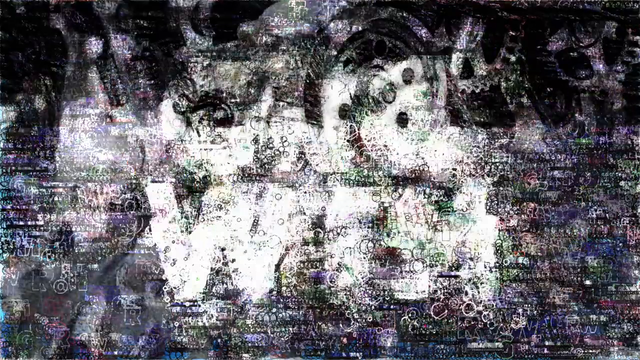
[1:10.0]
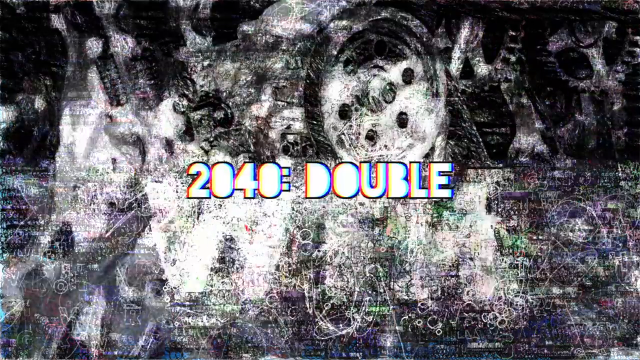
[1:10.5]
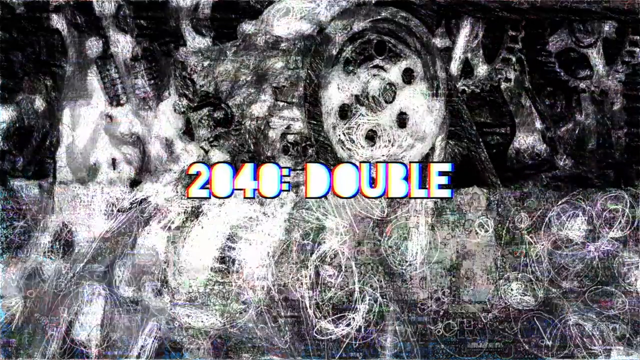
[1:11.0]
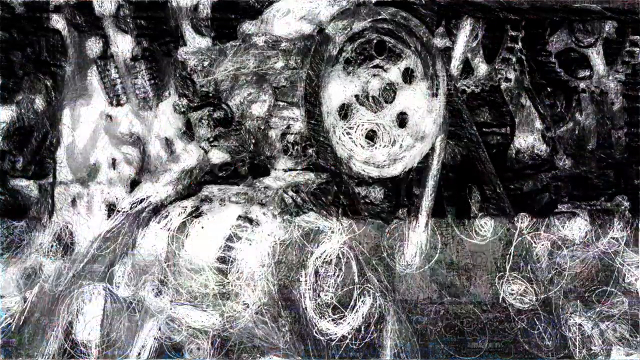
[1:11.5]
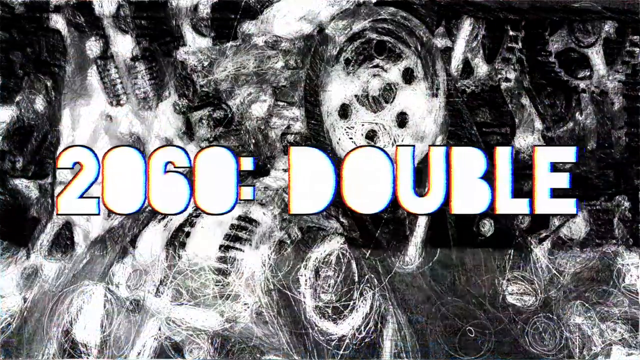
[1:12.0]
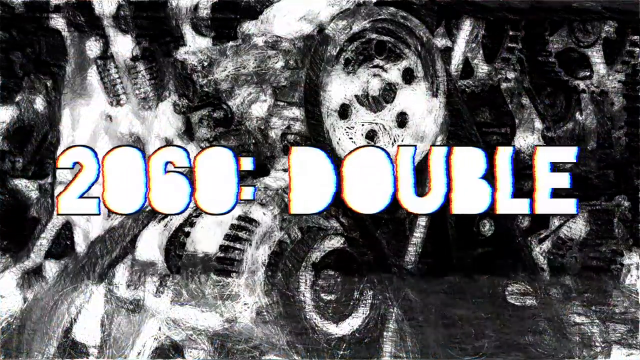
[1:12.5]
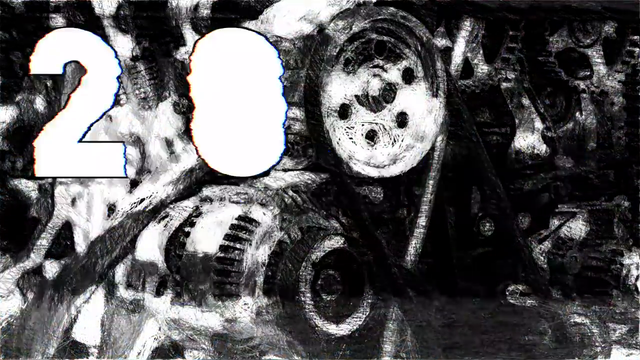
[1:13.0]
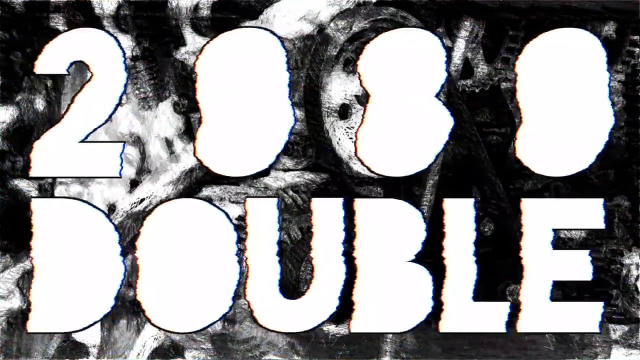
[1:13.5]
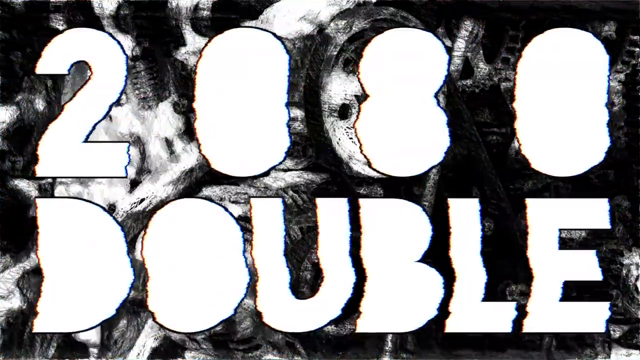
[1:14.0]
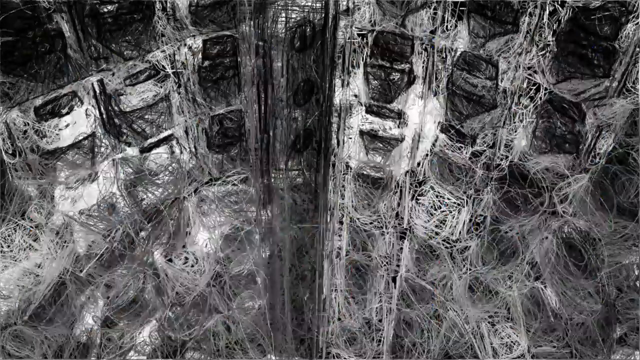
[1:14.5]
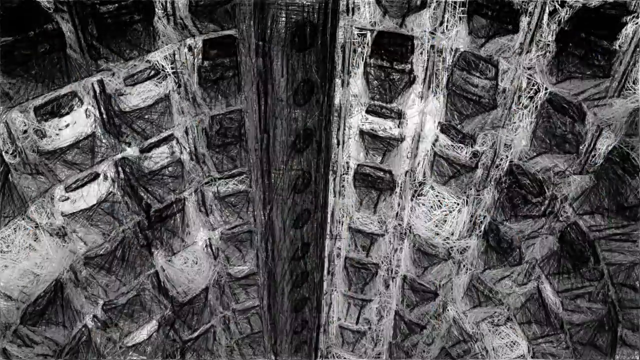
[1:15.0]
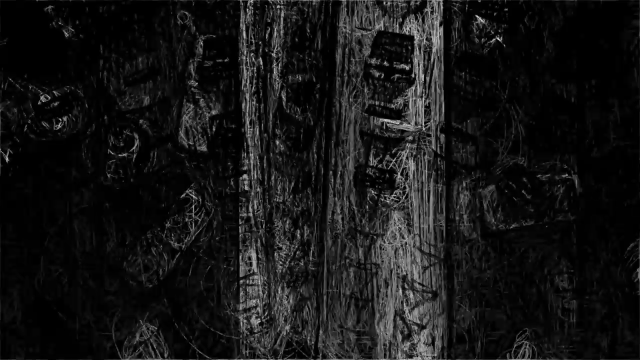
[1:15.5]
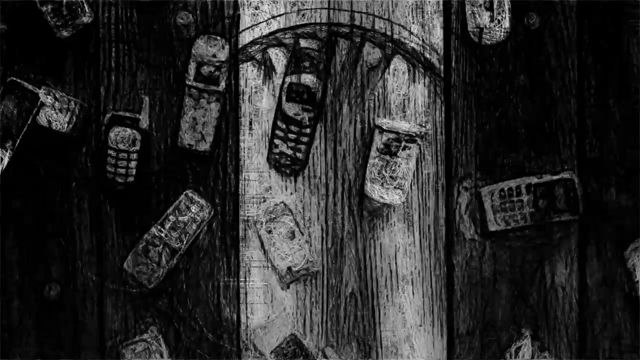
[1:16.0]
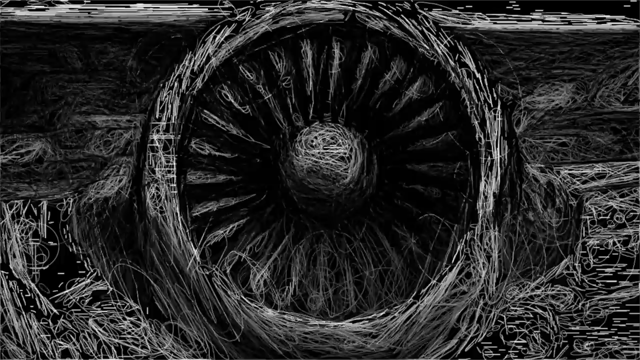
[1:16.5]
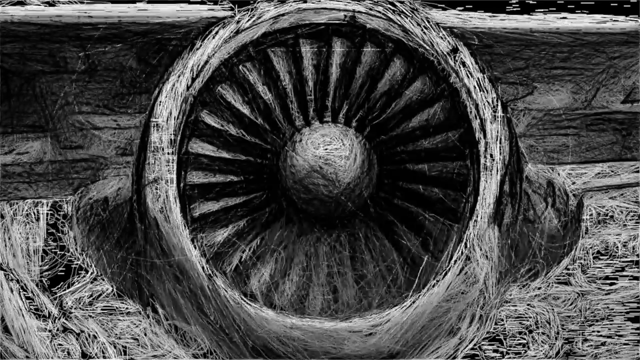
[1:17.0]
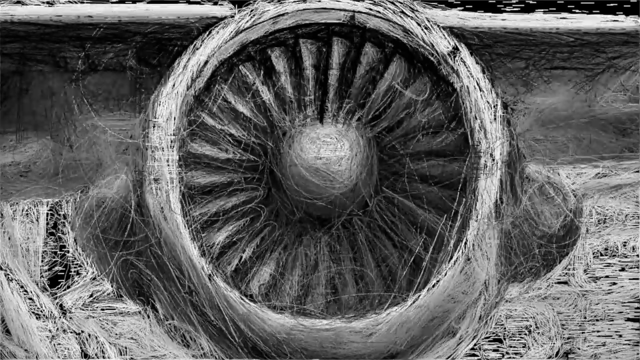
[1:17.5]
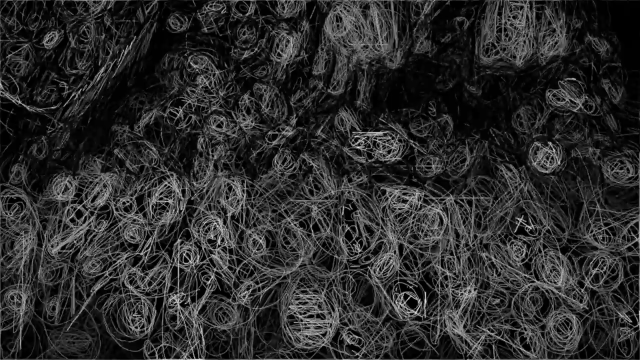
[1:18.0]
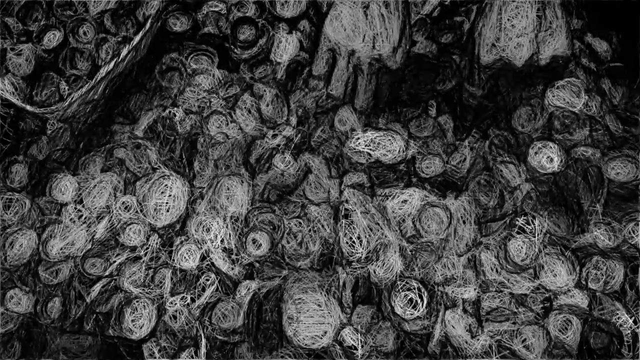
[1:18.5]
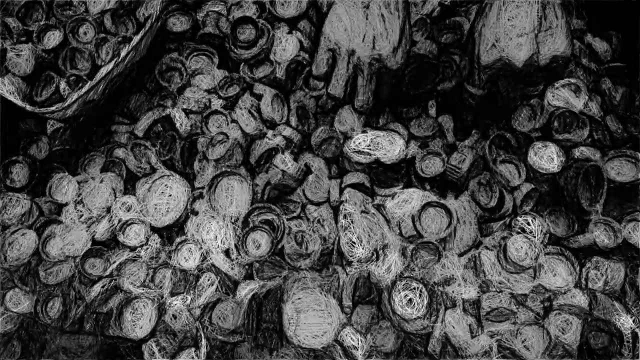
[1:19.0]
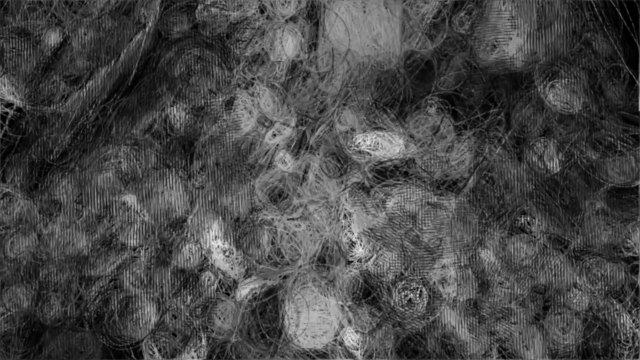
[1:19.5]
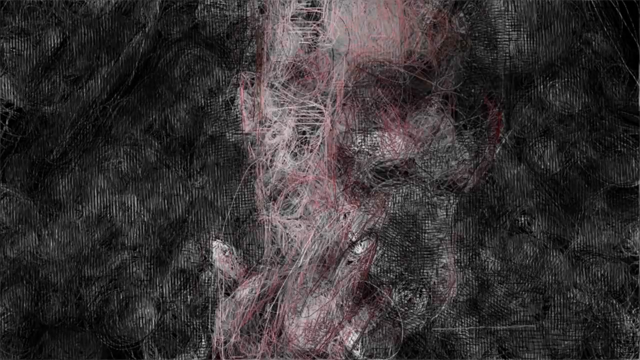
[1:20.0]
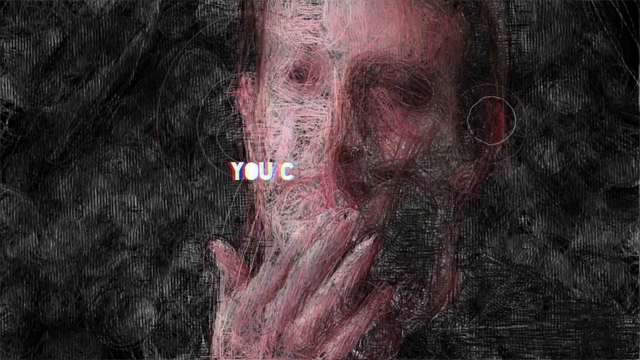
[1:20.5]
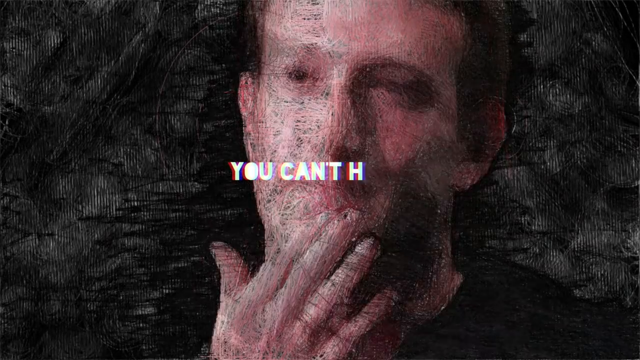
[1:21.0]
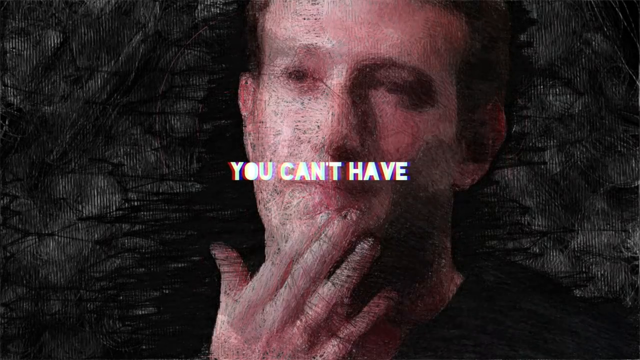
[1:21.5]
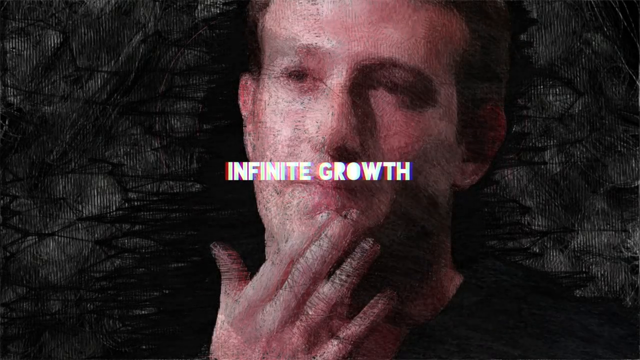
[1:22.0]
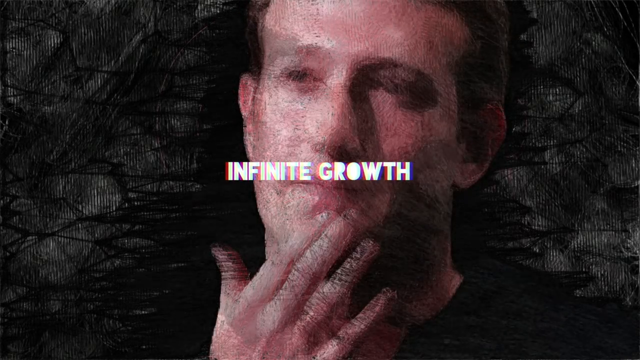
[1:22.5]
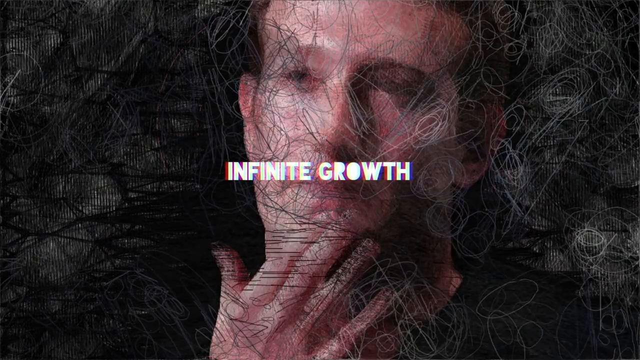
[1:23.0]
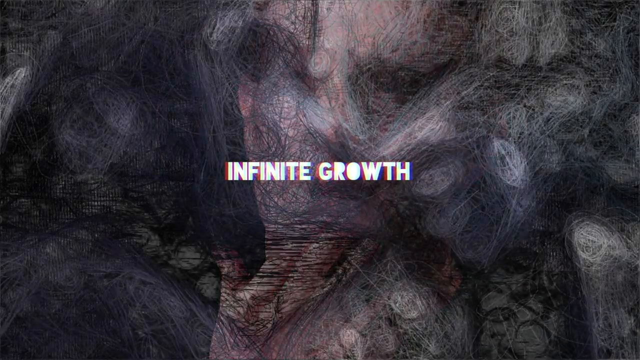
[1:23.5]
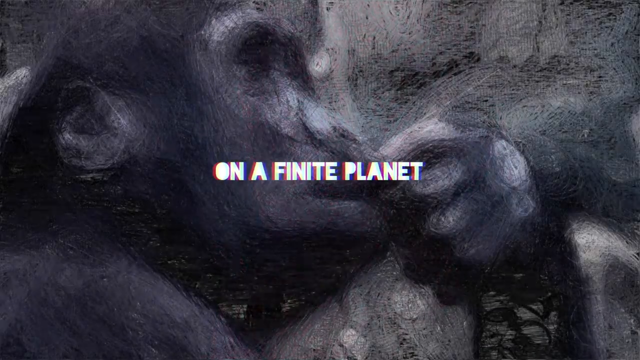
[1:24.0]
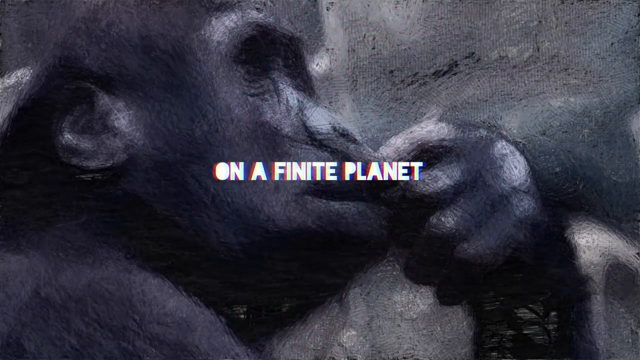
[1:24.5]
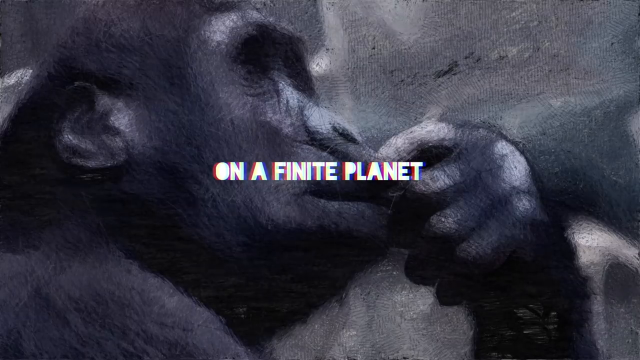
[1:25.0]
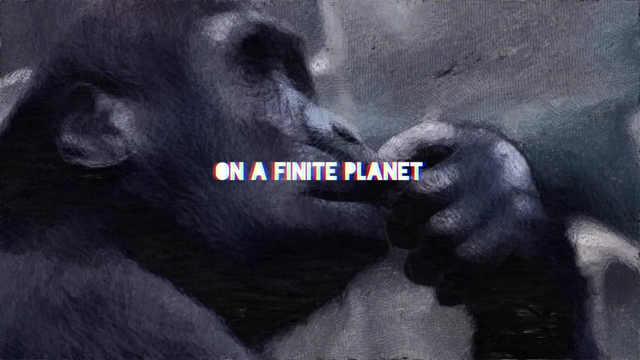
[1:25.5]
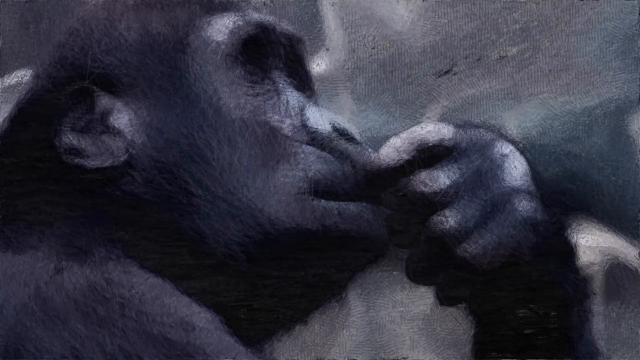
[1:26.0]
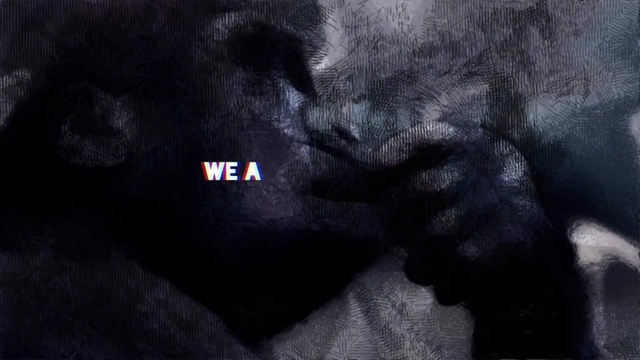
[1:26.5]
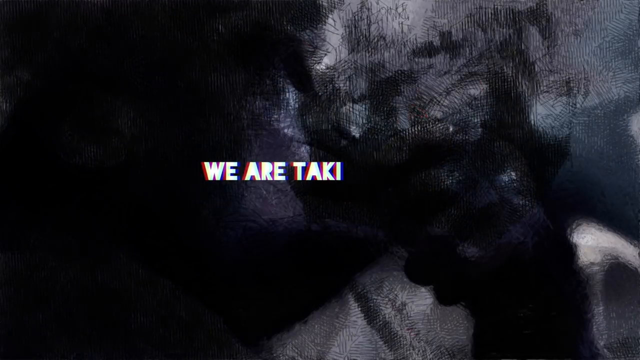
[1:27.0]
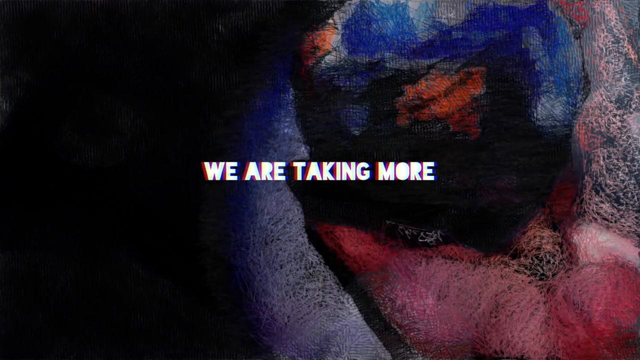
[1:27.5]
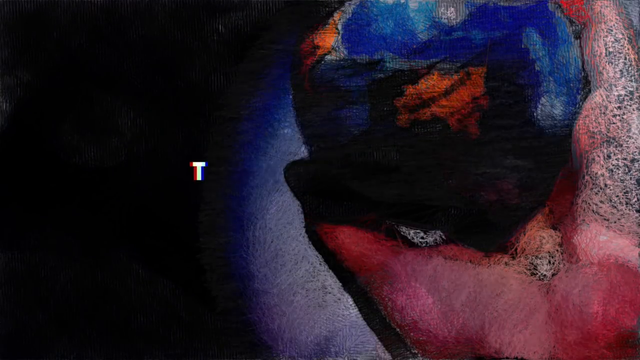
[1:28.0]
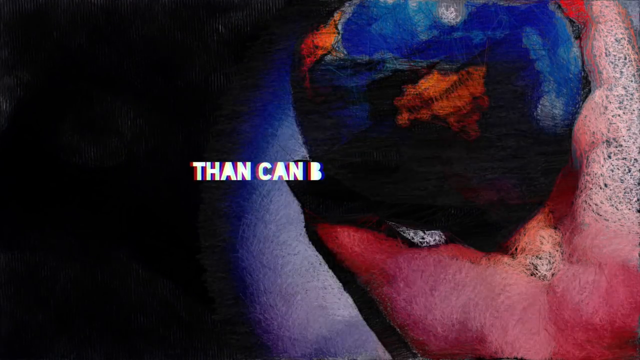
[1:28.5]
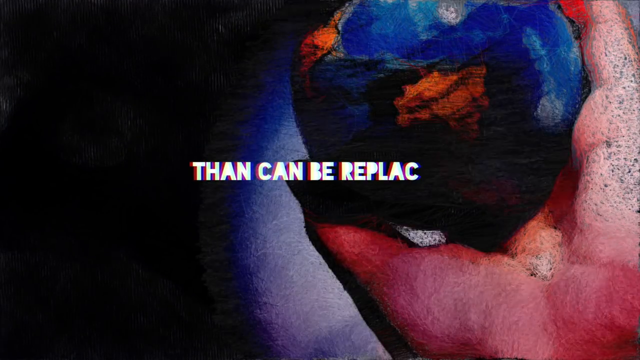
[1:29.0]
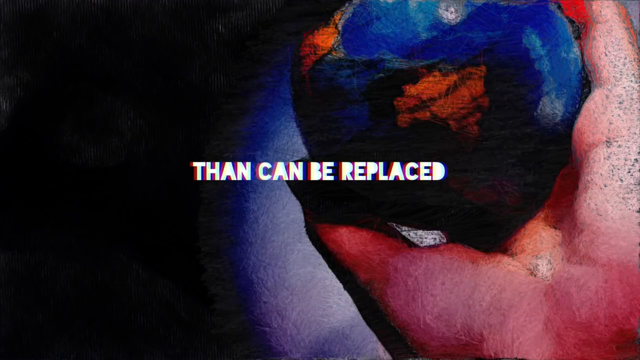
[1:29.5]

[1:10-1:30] On-screen text repeatedly reads "it's doubling" alongside changing numbers. Text then reads "you can't have infinite growth or an infinite planet" and "we are taking more than can be replaced". Someone is holding a world map.